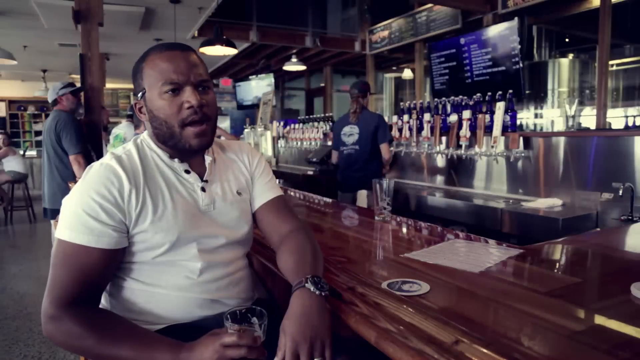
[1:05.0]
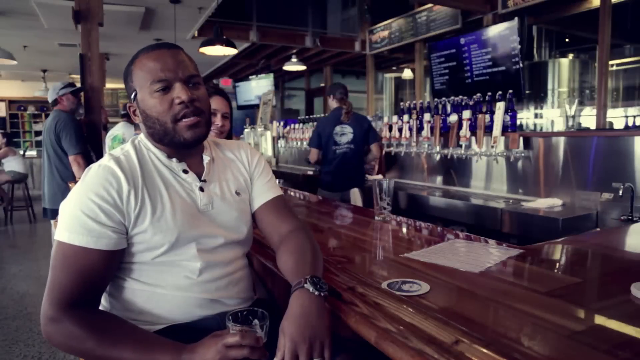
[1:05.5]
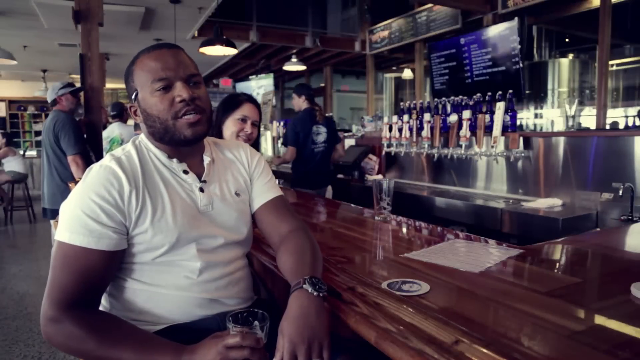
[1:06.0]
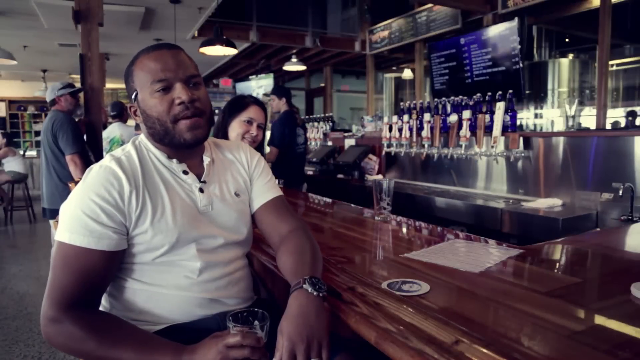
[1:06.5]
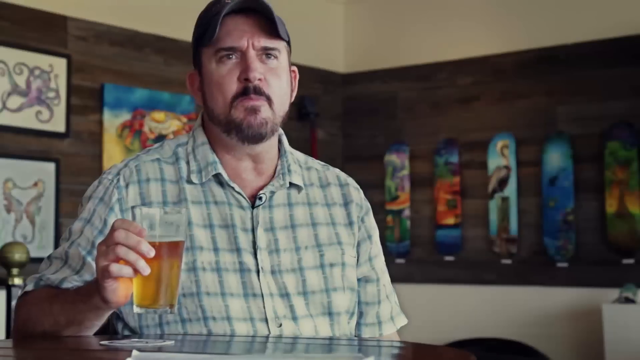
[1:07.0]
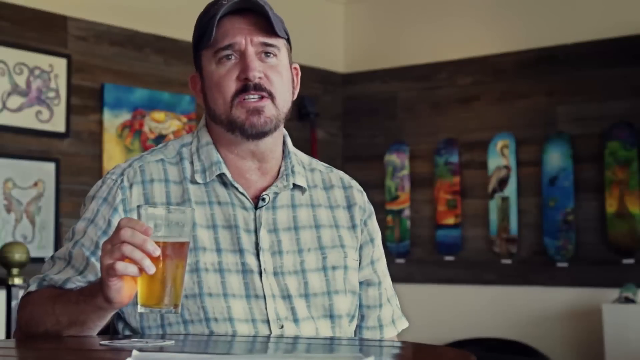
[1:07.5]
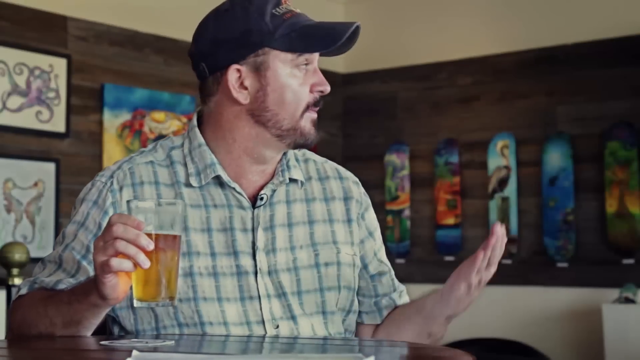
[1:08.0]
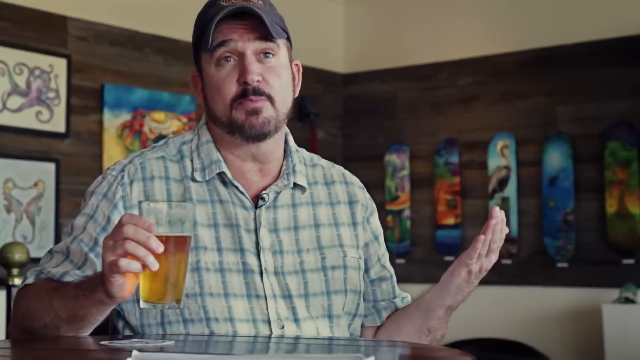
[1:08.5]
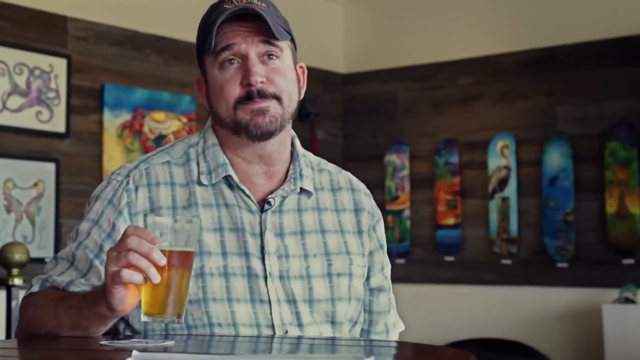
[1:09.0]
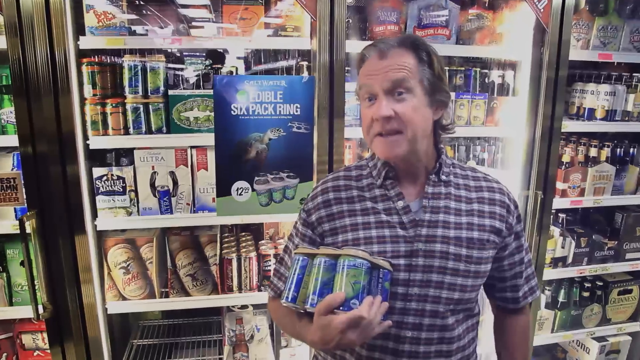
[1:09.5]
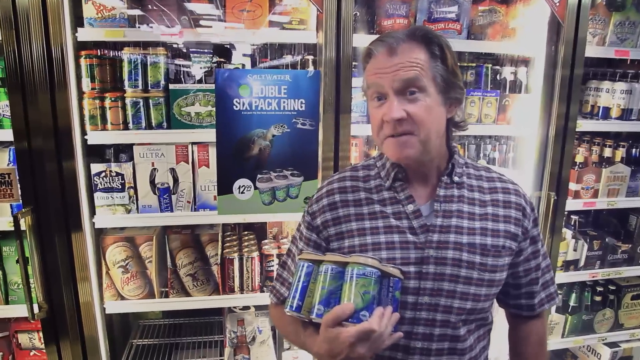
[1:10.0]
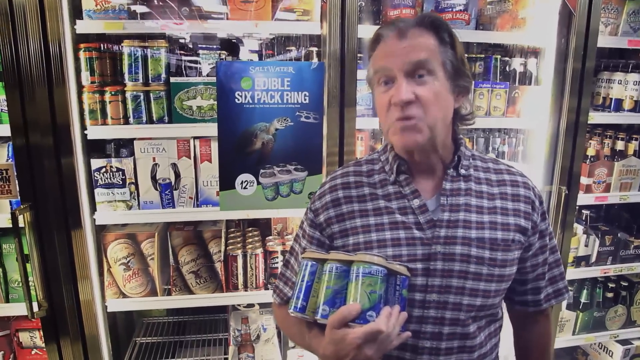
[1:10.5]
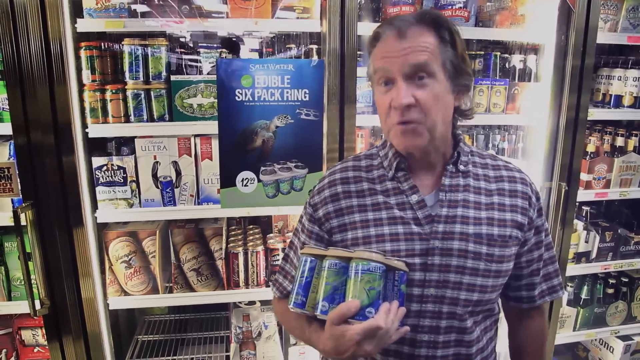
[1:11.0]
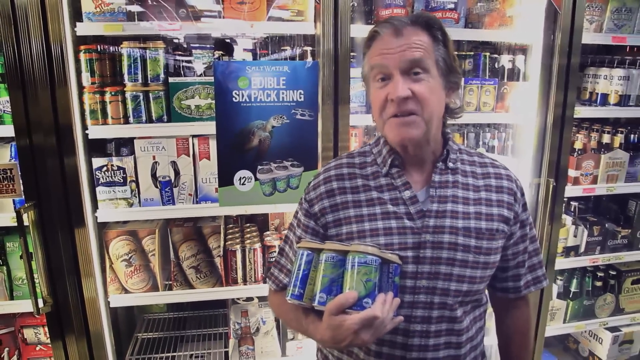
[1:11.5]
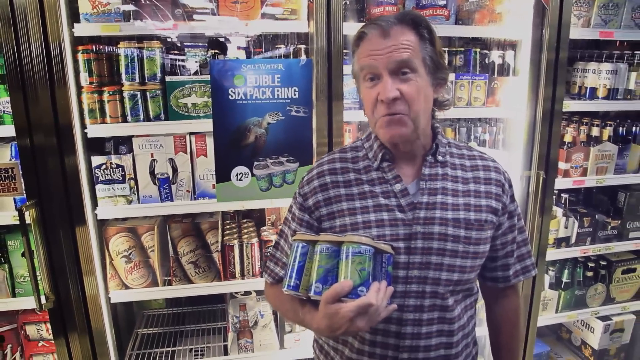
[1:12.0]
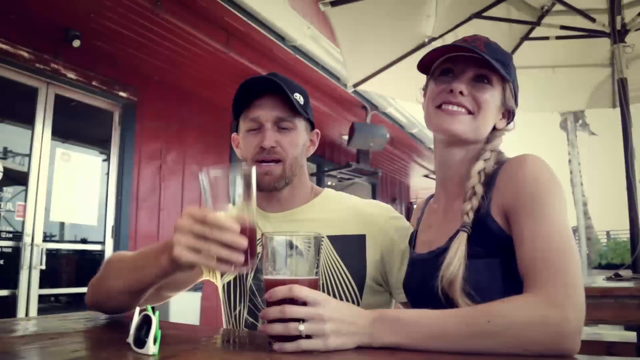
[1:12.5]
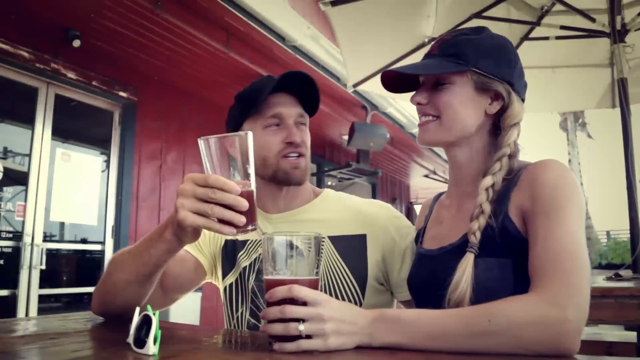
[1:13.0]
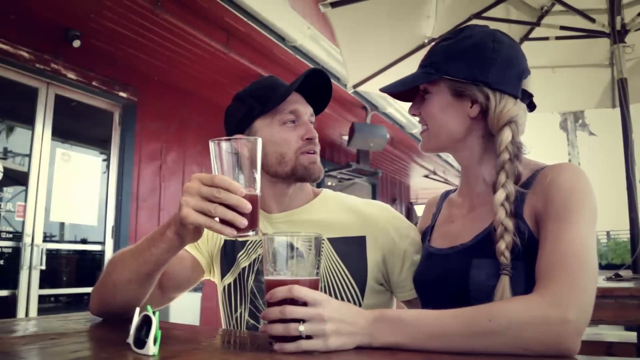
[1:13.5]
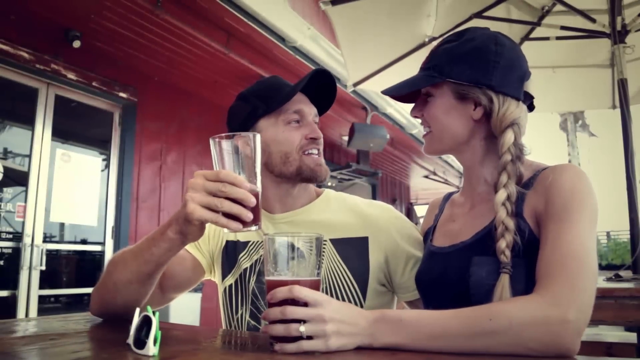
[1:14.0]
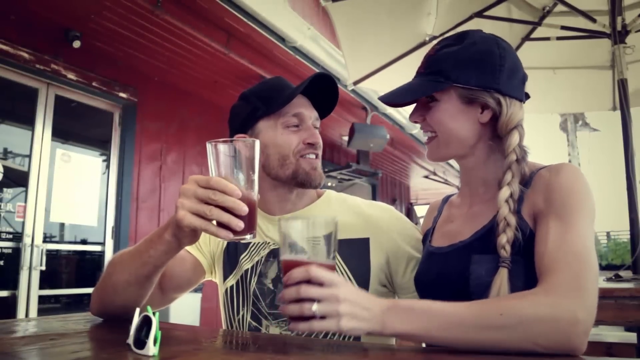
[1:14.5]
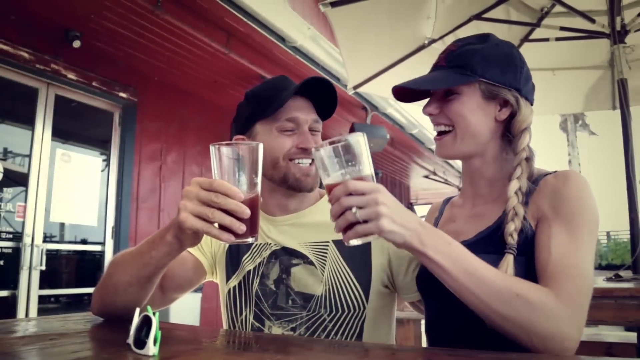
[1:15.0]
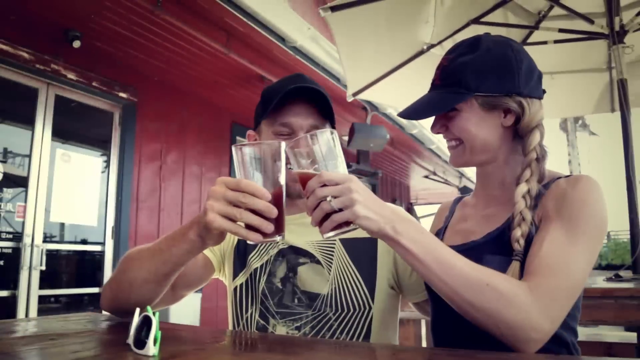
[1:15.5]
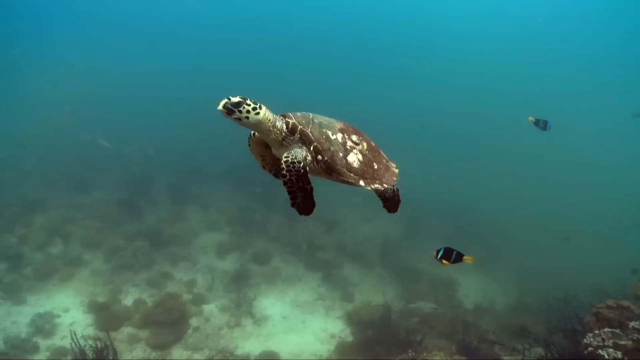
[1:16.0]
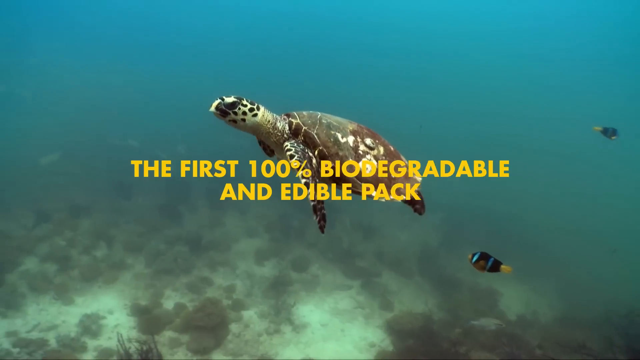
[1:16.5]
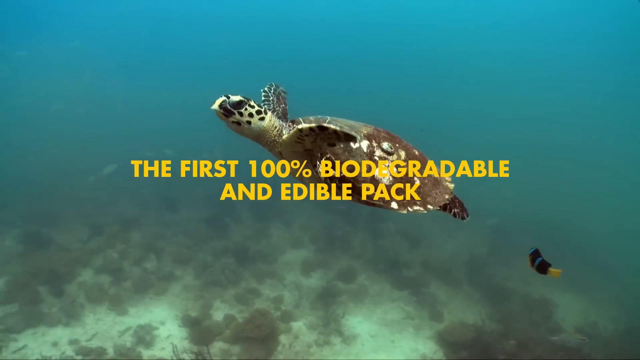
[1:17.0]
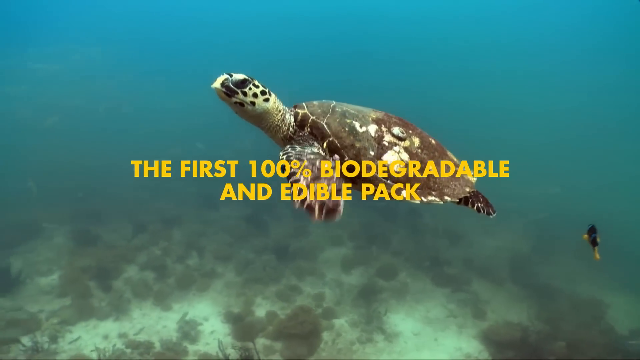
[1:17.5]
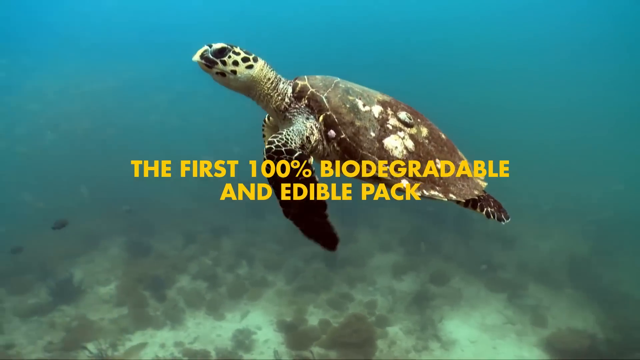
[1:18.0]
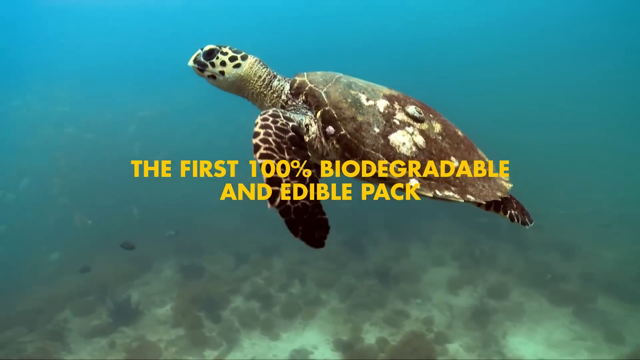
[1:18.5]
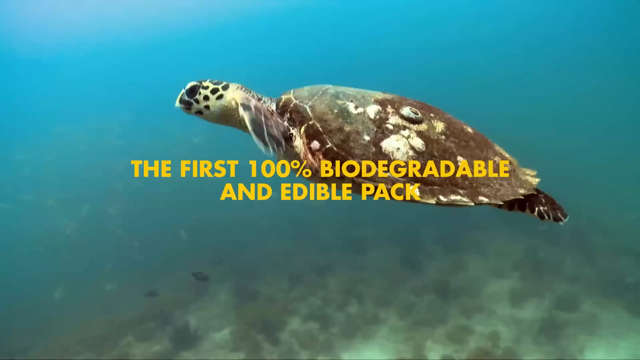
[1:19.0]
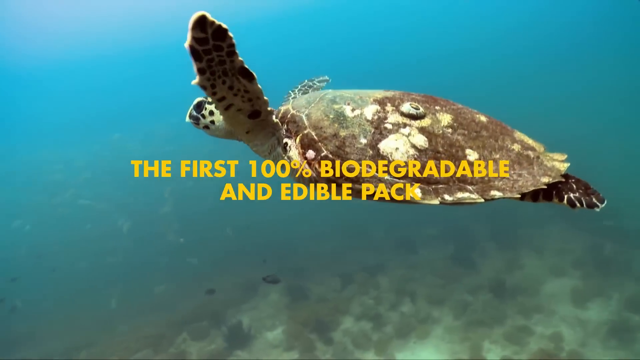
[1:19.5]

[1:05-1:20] More people are shown talking with their beers, two of them in the bar. The video cuts to a man in the liquor store and then to a couple who seem to be out at a restaurant, with the setting changing three or four times. The video then goes back to the turtles and refers to the first 100% biodegradable edible pack. A digital turtle swims in the ocean, and this shot looks more realistic, seeming like a real turtle rather than a digital one.